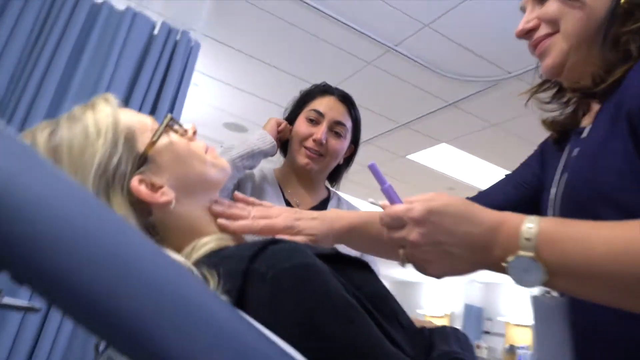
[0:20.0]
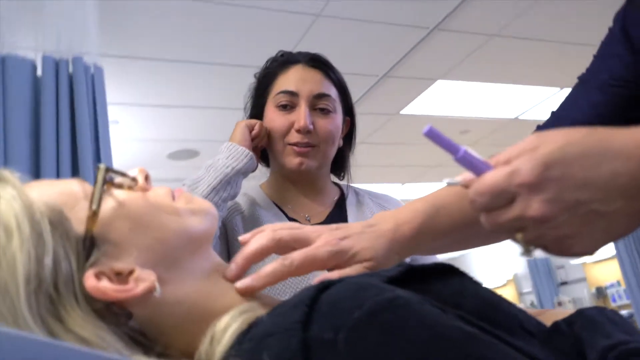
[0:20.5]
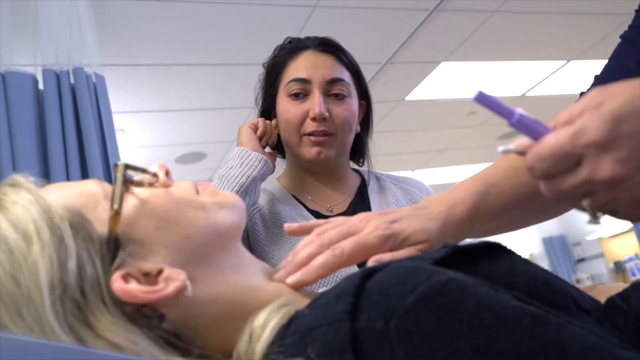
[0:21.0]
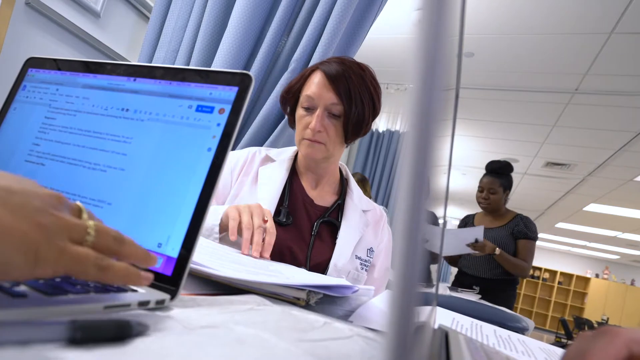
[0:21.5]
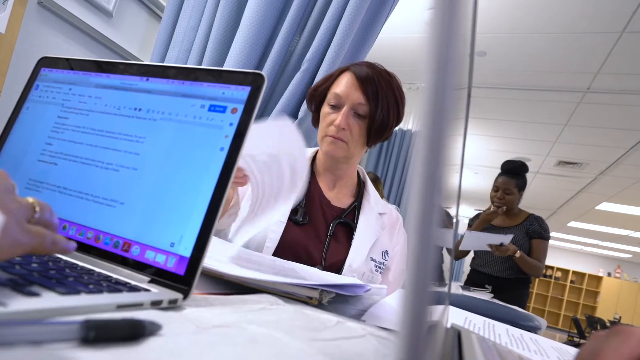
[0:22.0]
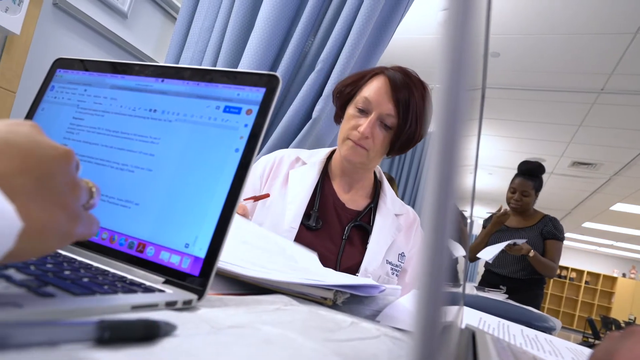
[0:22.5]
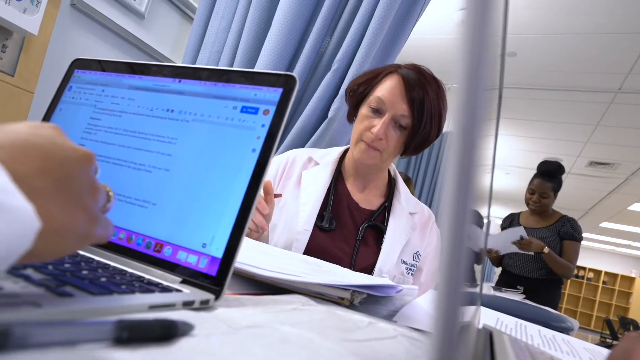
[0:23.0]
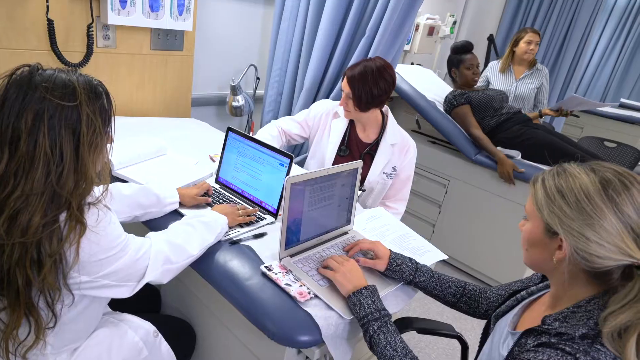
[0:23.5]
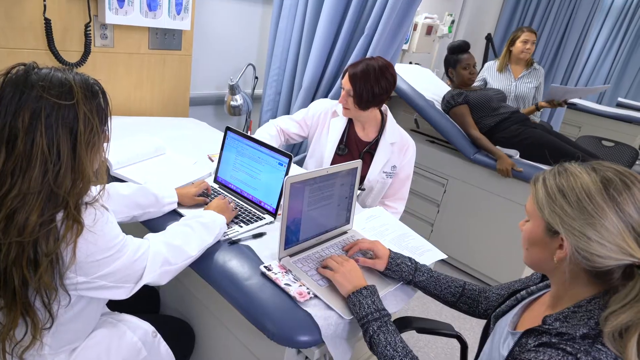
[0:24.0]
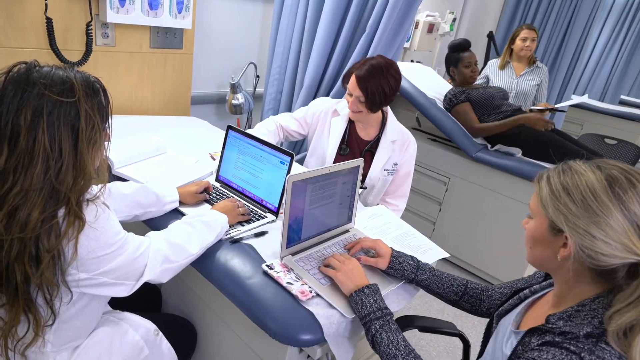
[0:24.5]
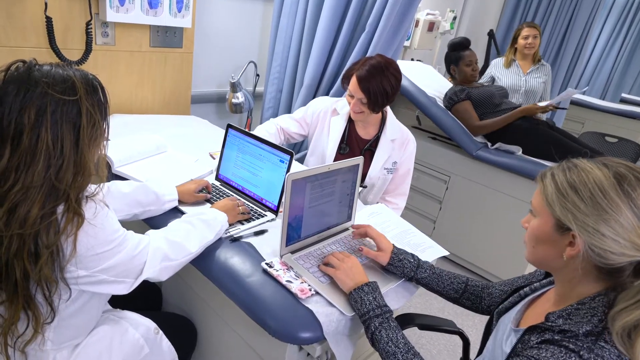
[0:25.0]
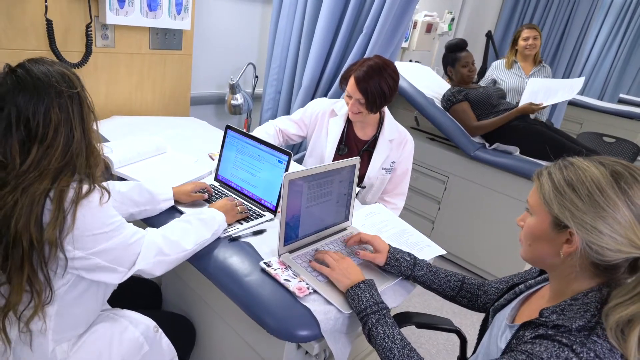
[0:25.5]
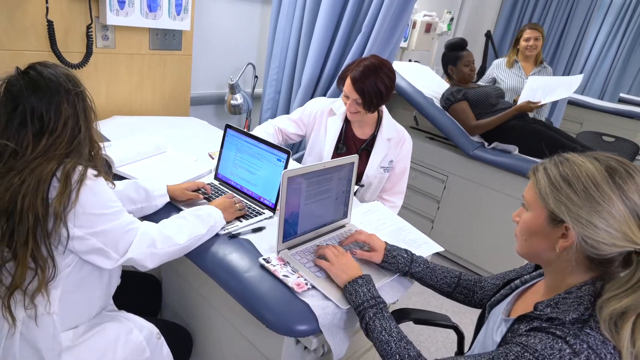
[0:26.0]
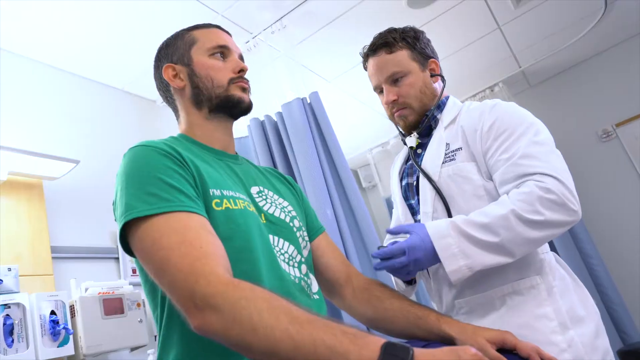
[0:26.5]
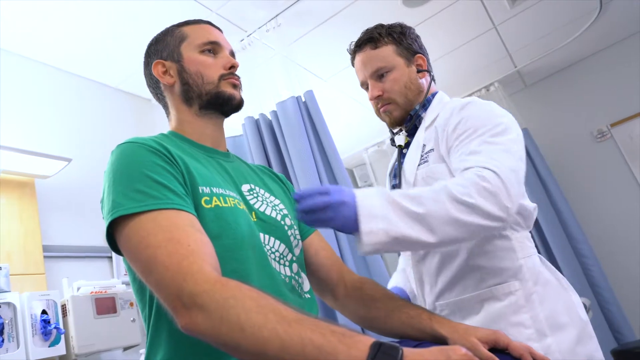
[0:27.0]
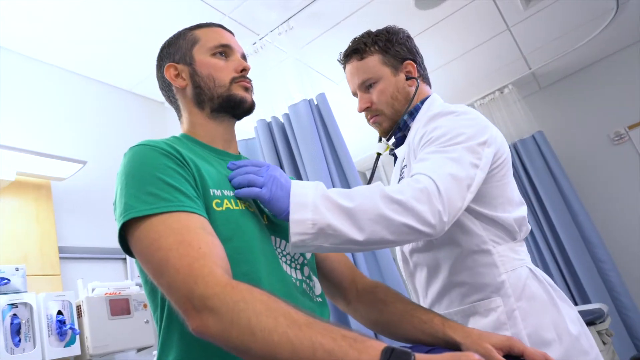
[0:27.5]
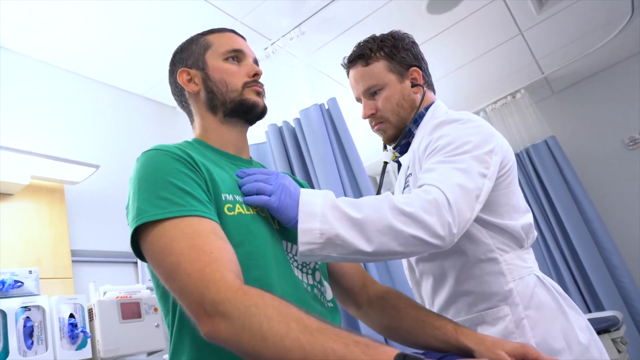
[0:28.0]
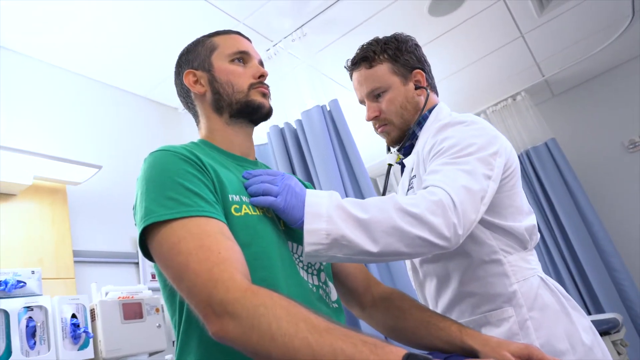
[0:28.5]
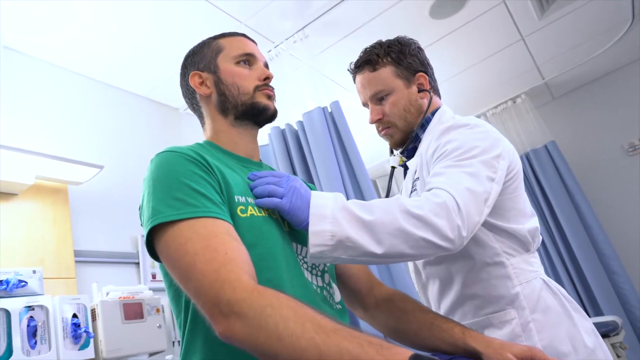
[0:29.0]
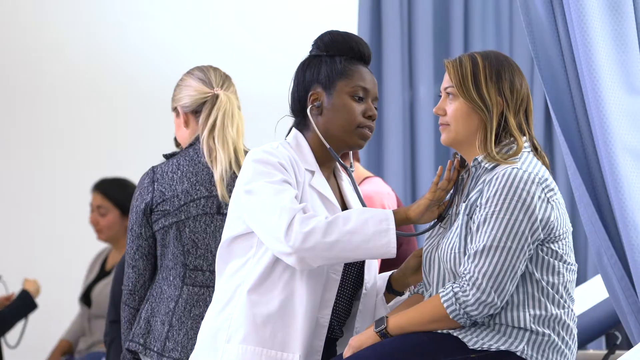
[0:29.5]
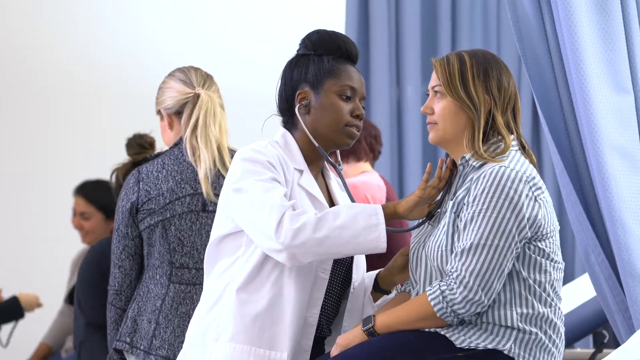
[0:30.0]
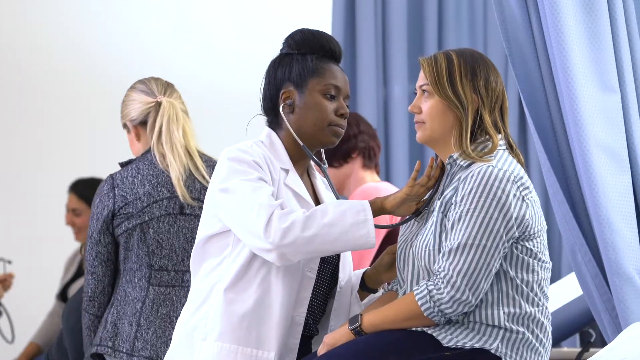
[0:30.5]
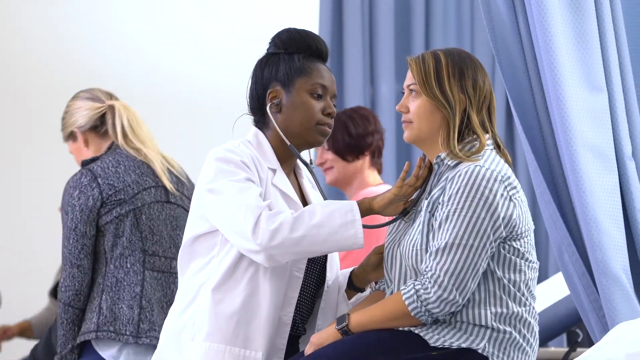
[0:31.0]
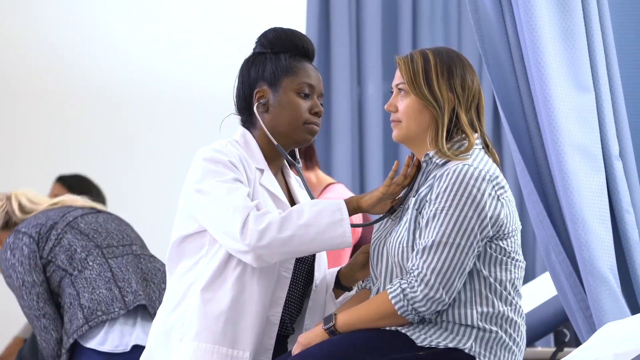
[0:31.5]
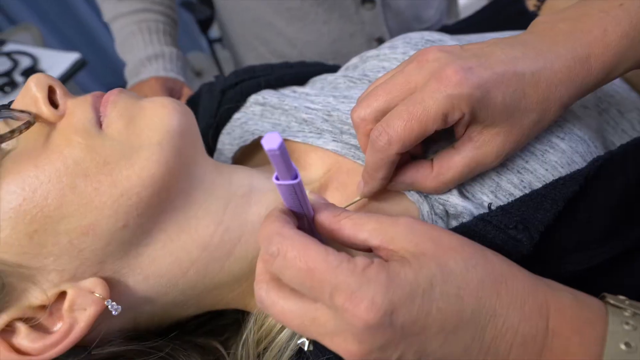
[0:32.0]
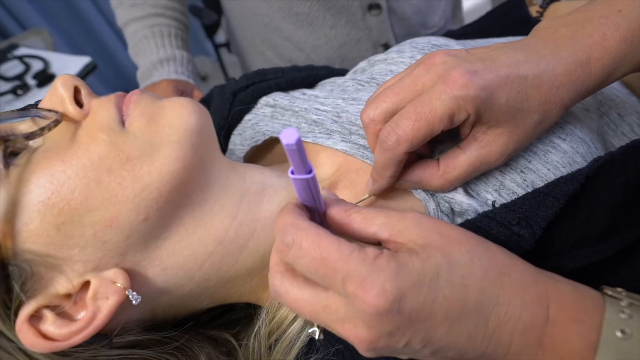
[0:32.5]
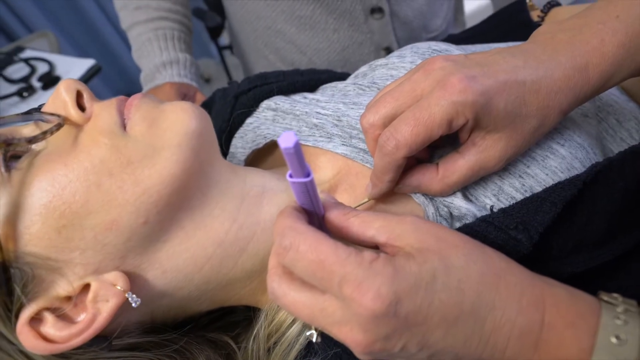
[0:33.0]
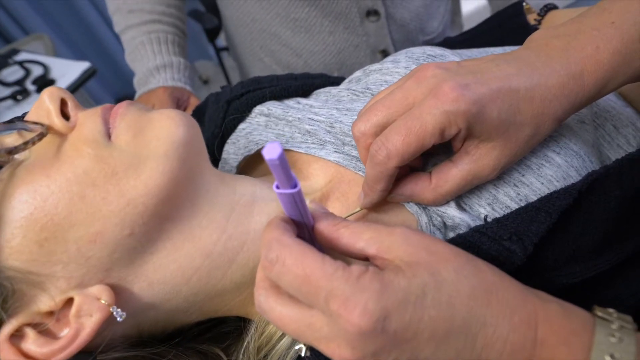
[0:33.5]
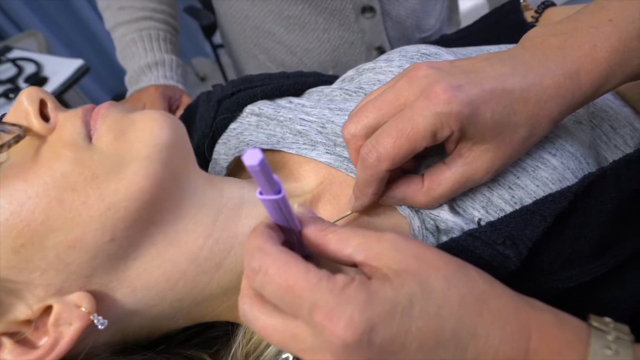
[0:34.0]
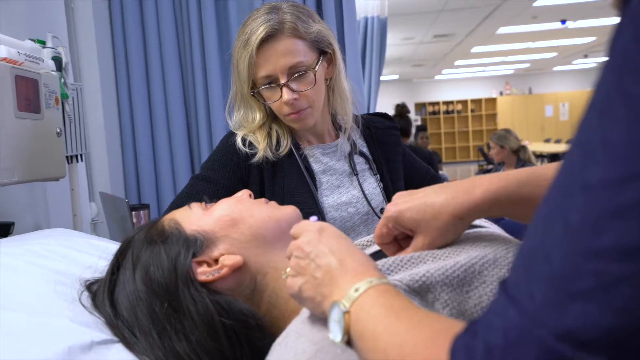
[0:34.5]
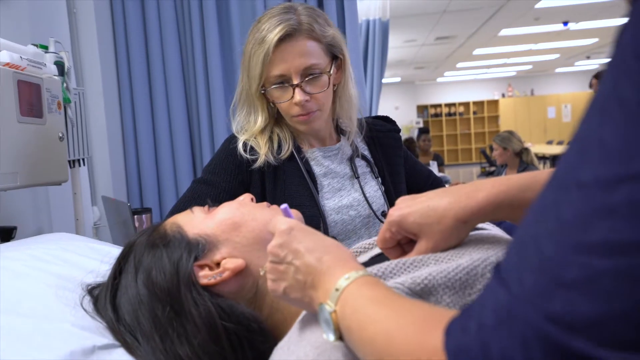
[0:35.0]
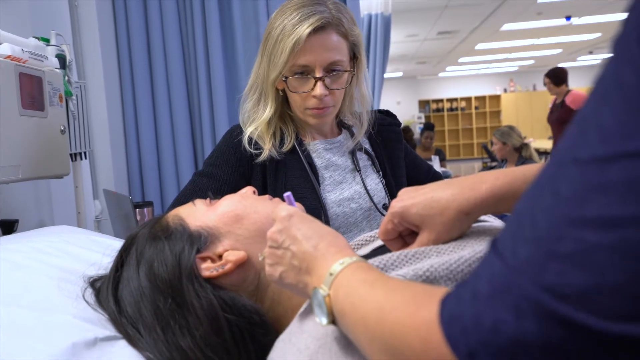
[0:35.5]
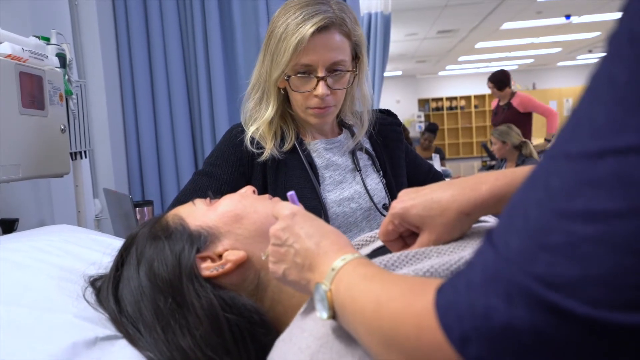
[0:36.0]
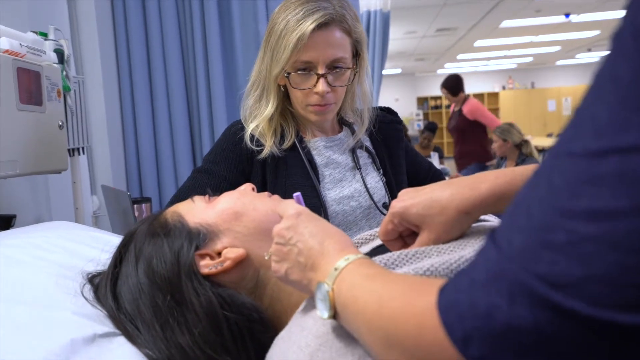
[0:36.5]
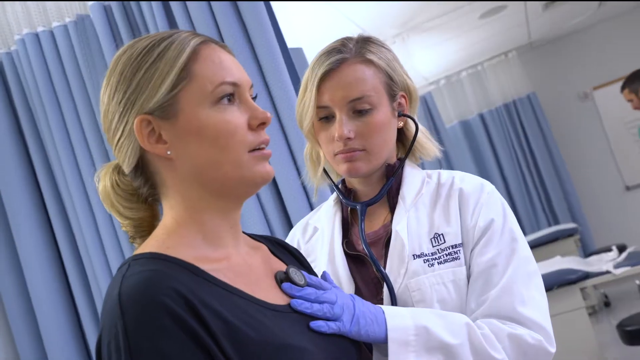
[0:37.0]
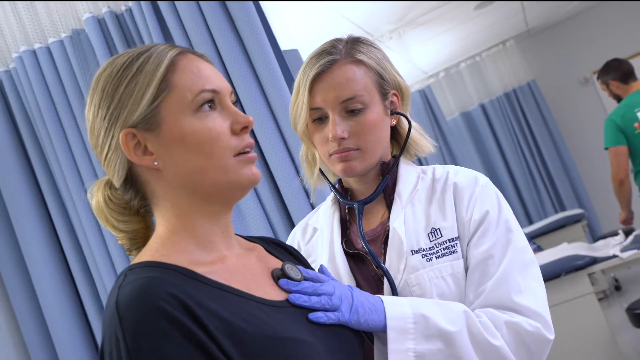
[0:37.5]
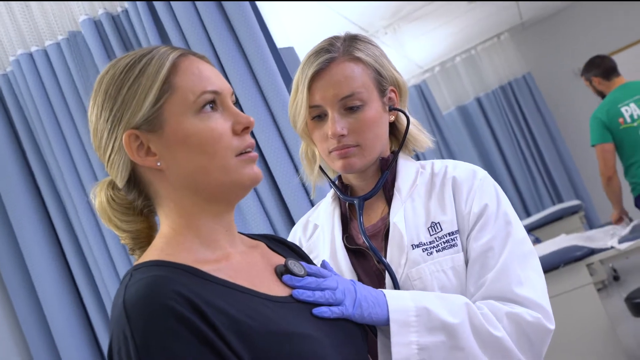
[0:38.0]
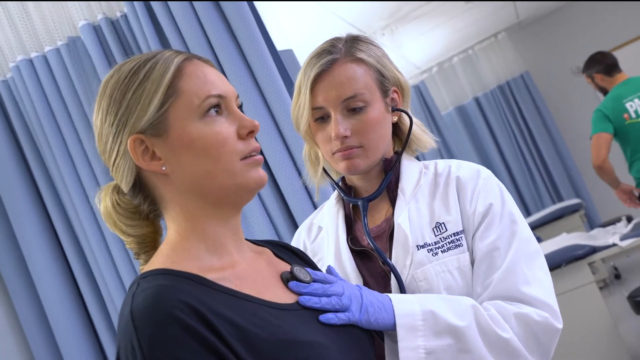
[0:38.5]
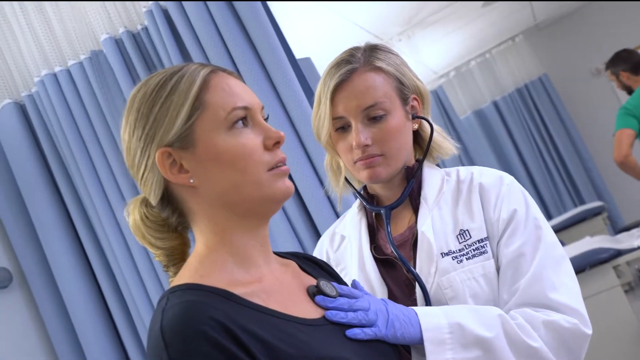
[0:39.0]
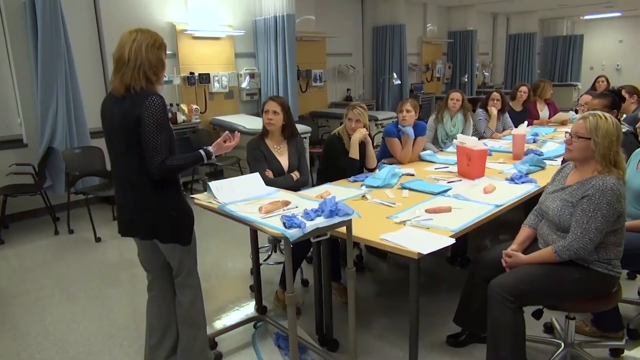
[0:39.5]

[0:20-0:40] In the clinic-like setting, two nurses are kind of treating a patient who has blonde hair and glasses. One nurse holds a purple pen and has a lanyard; the other person appears to also be a nurse and has dark hair. Blue curtains are in the background, and the white-colored ceiling with lights is visible. In the next scene, doctors or nurses kind of use a laptop, typing something, while other nurses in the background do other things. Many other nurses kind of type away on the laptop while a dark-skinned patient sits on a doctor's table in the background, holding some papers. Next, what appears to be a doctor, a man with short hair wearing blue latex gloves, checks the heartbeat of a younger-looking male patient in a green shirt. Another doctor with dark skin then checks a patient wearing a striped shirt, with a girl with blonde hair and blue curtains in the background. A nurse checks a patient who has glasses, and the nurses use some kind of purple tool while other nurses in the background do other things. A nurse checks somebody's heartbeat, followed by a scene of many people sitting at a table, kind of hearing a discussion or something being said.